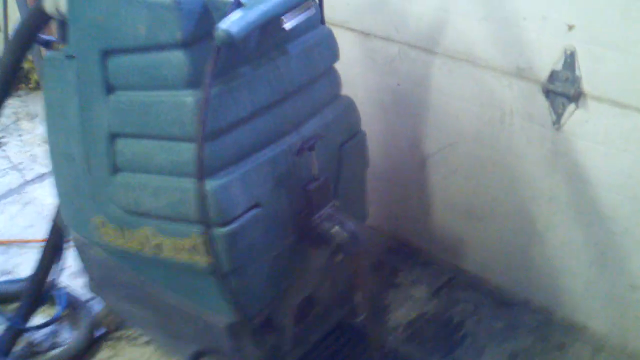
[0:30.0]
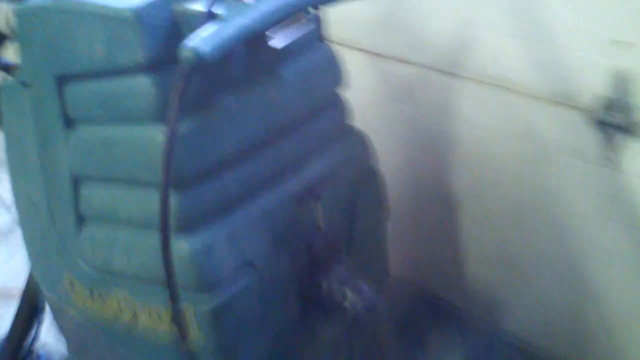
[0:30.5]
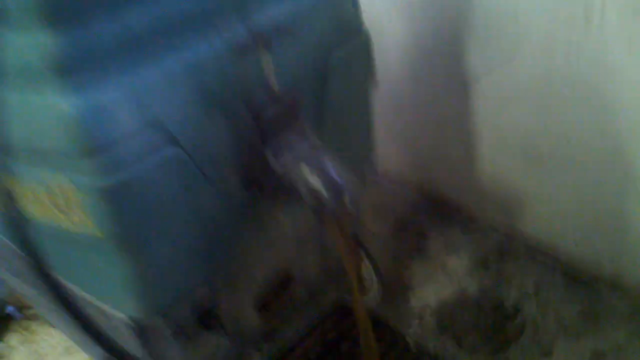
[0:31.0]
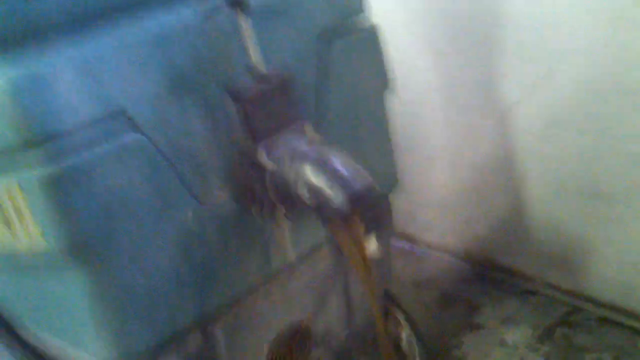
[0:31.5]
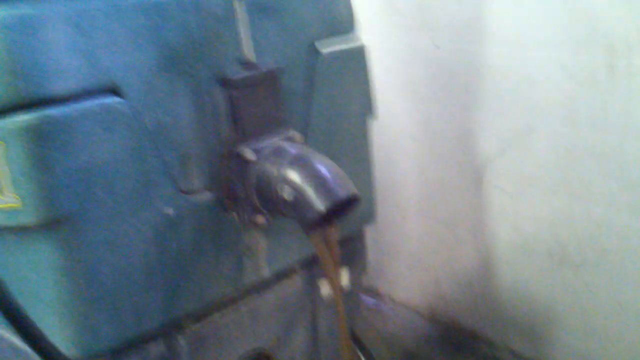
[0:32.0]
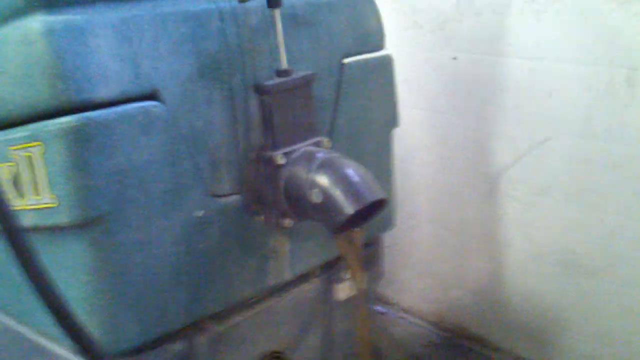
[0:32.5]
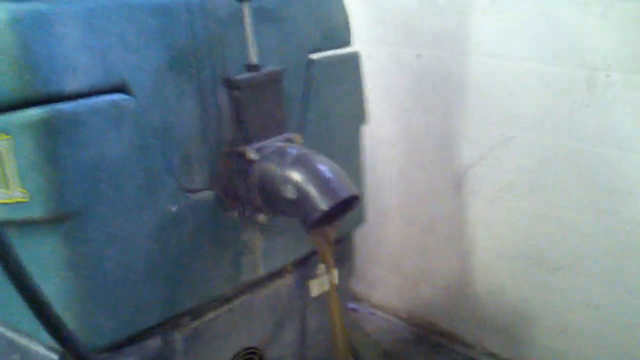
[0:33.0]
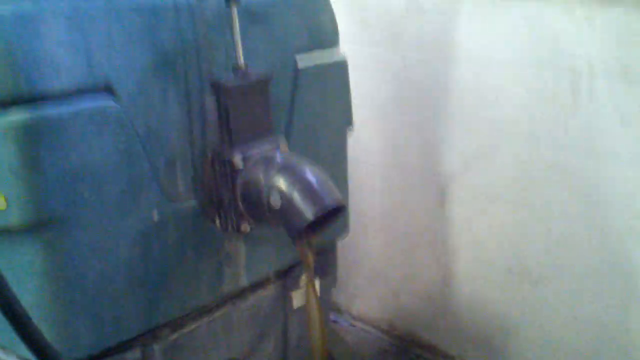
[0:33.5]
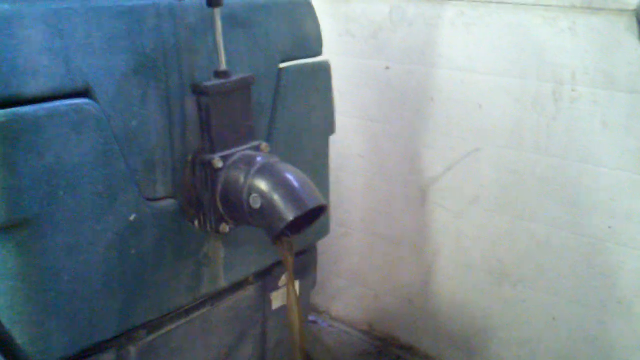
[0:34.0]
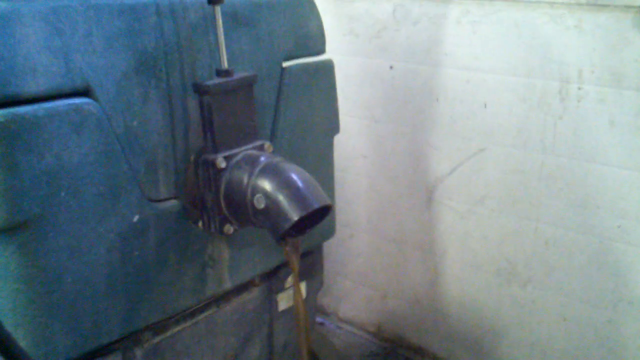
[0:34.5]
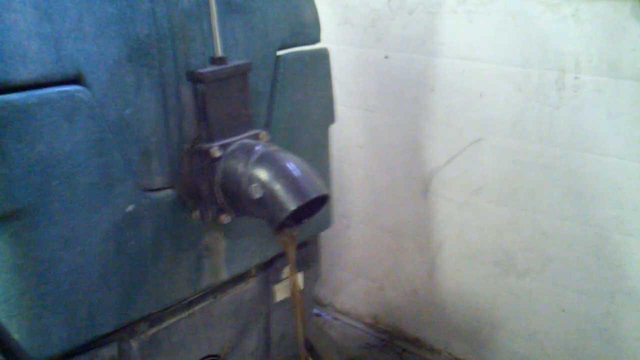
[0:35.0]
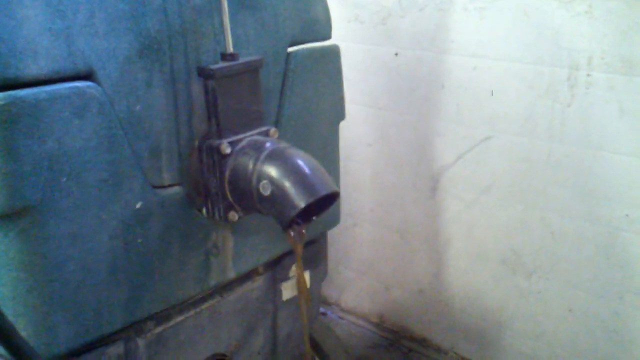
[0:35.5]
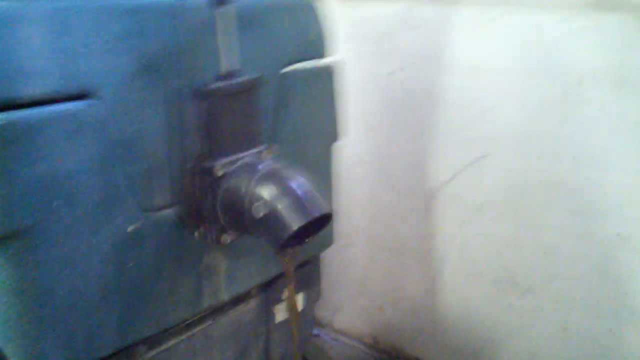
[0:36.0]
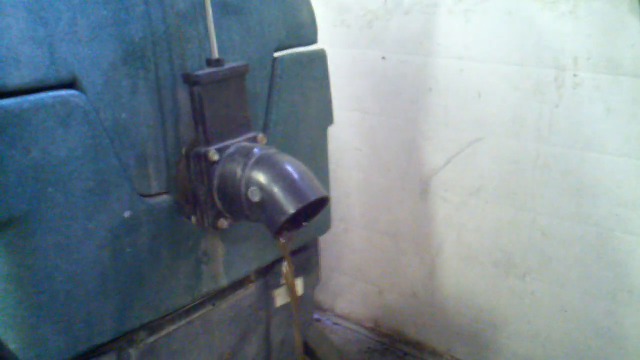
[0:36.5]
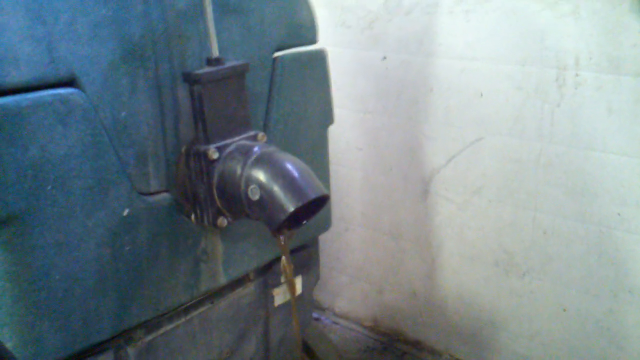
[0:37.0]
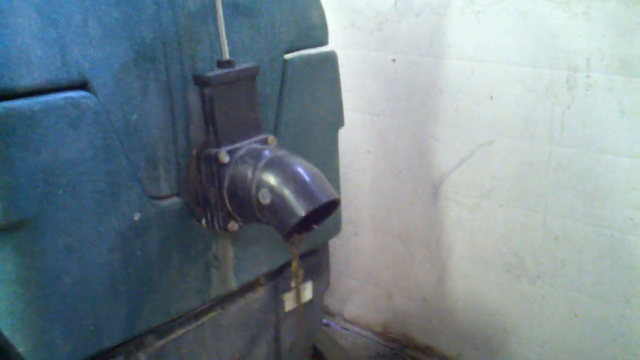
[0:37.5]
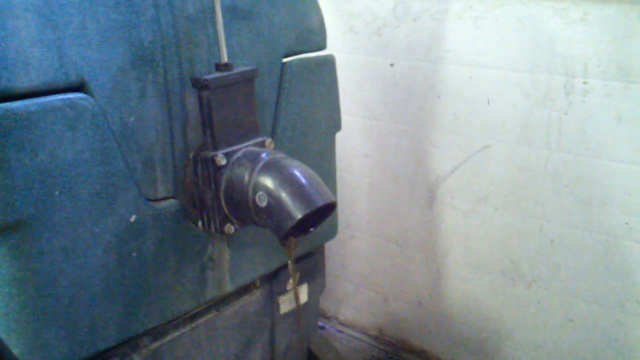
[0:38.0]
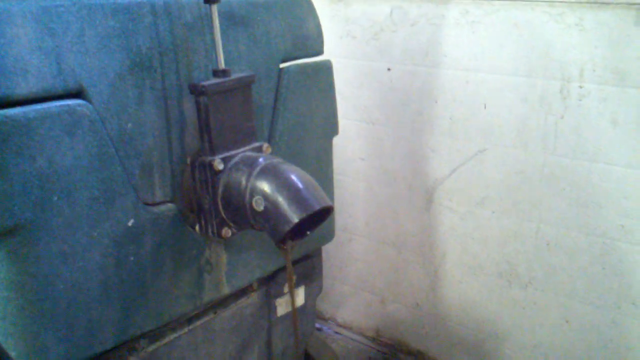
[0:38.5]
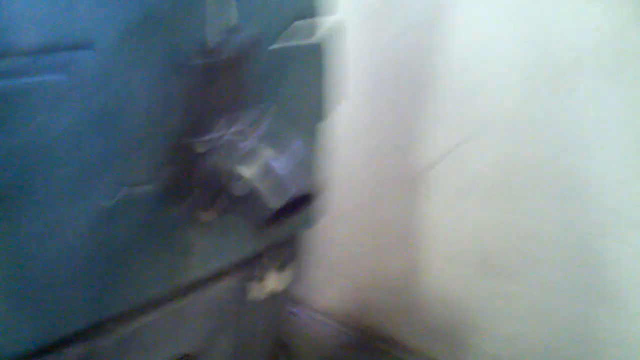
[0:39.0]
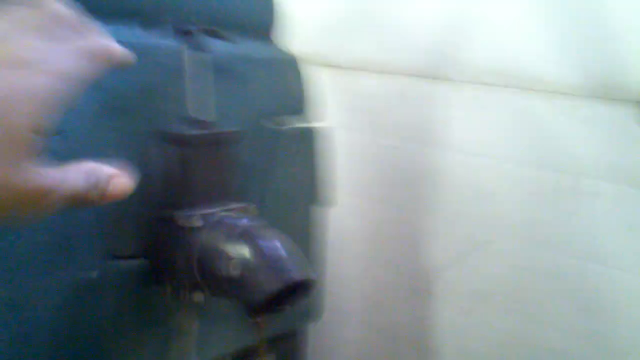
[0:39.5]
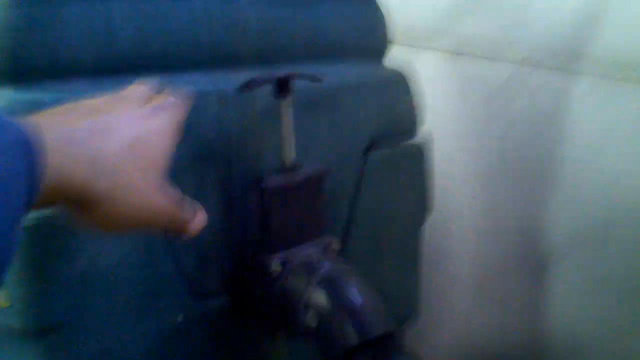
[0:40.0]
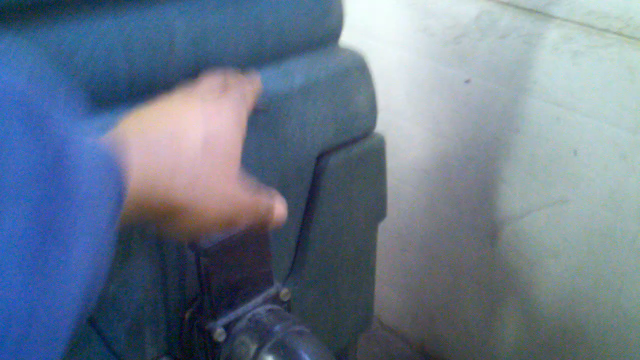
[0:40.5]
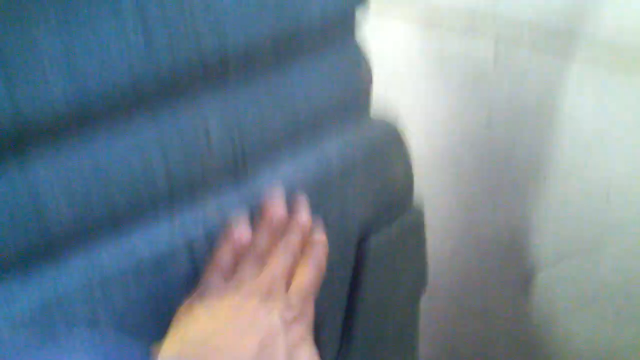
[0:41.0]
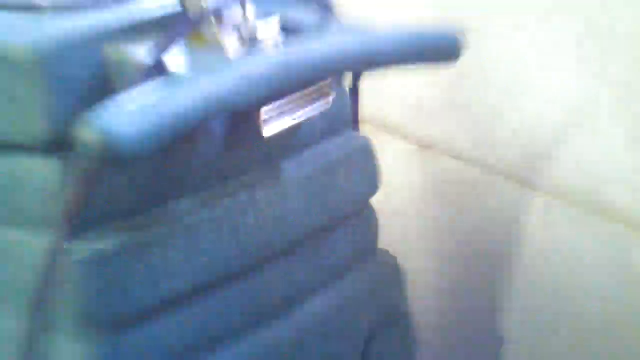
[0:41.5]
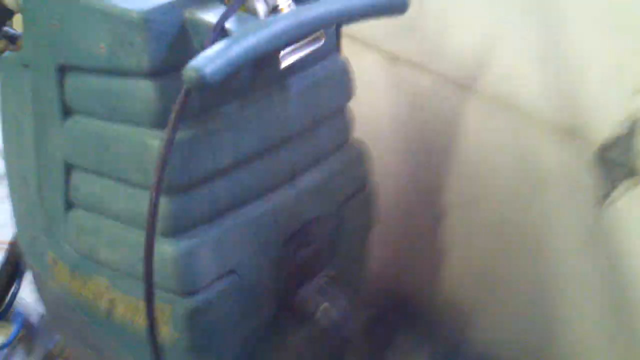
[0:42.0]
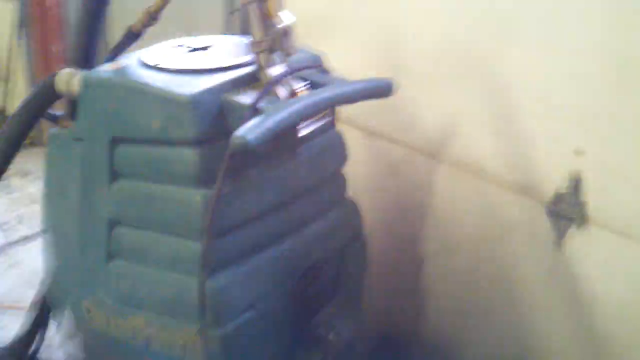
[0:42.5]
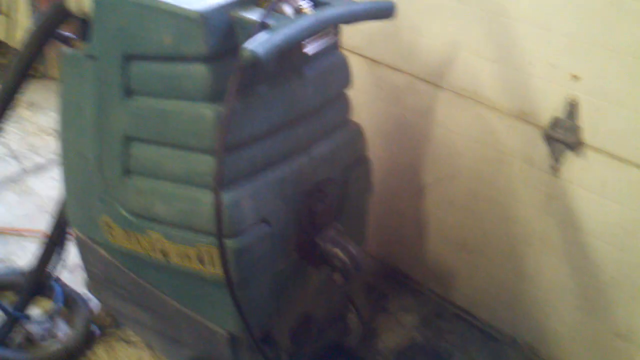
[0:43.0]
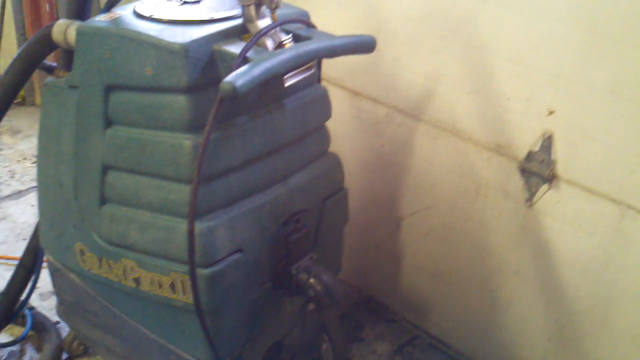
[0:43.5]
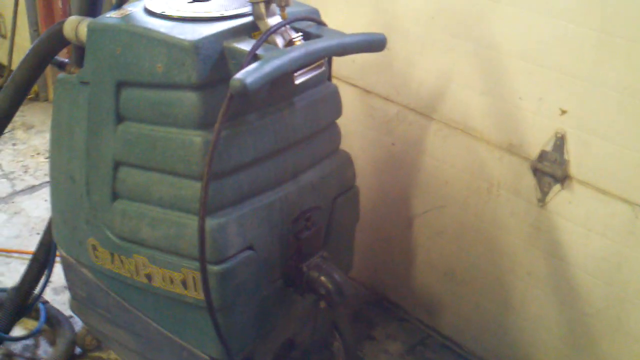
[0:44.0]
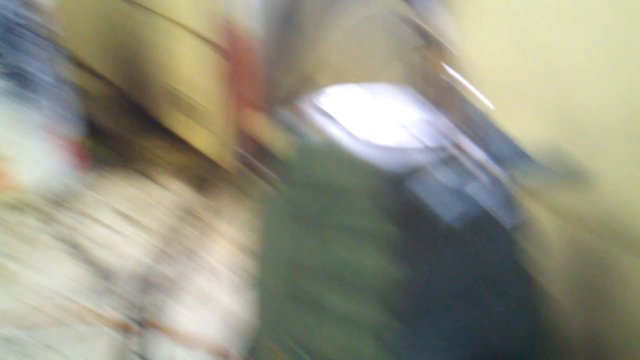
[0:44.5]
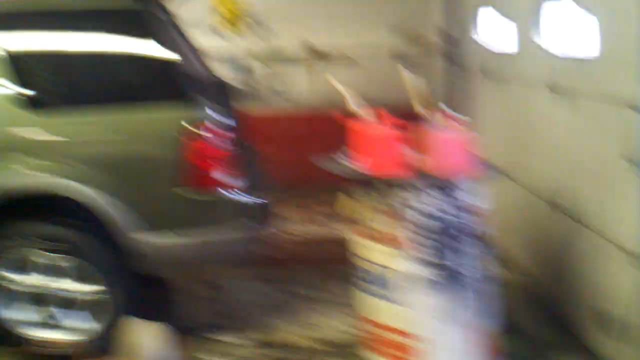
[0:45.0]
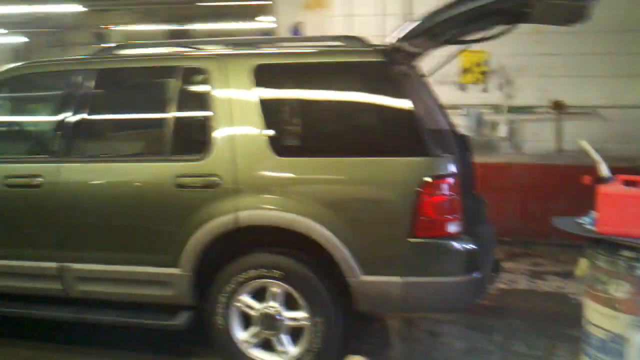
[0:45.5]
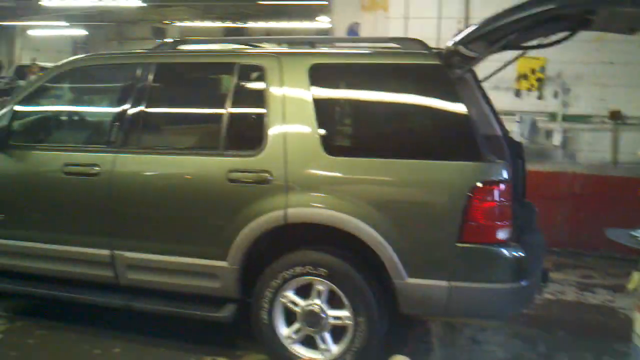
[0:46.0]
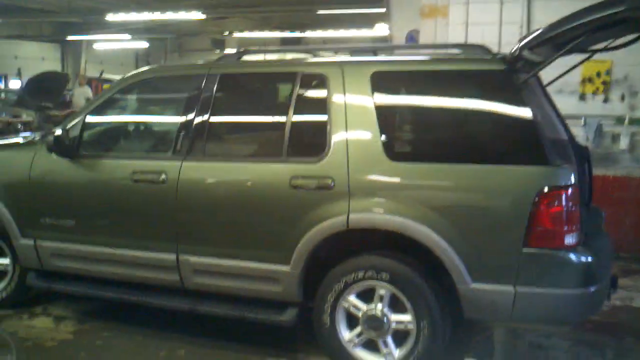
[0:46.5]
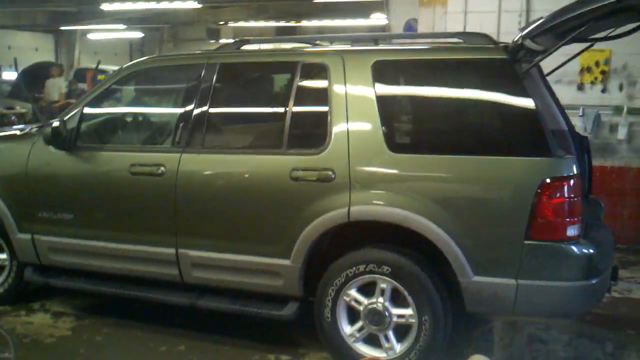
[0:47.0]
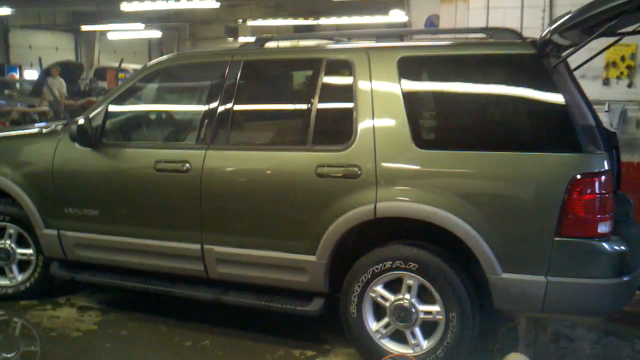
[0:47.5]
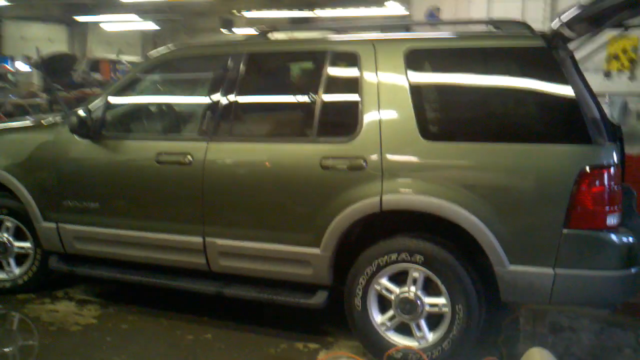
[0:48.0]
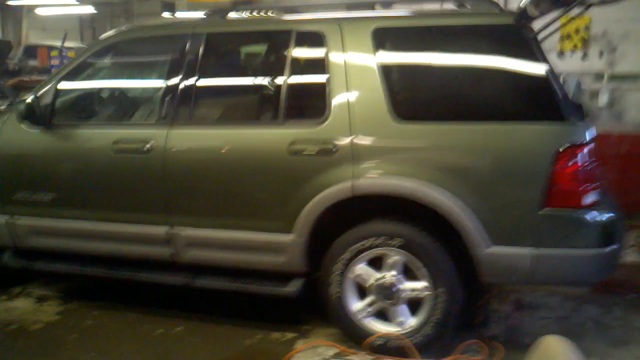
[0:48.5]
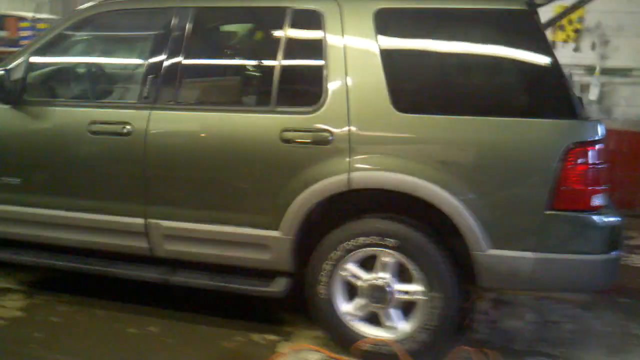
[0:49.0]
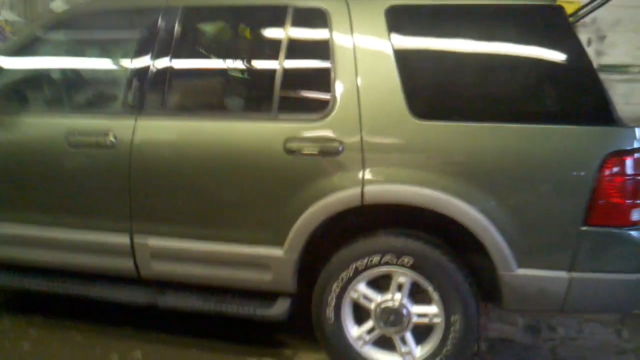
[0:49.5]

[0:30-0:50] A large blue industrial floor cleaner is shown. Large hoses come off its left-hand side. On the right-hand side, a person has lifted up the handle on top of the large black spigot, opening the valve, and dirty water pours out of the spigot, probably down a drain. The camera then turns to show that the scene is inside a shop with automobiles in it. The machine appears to be a large industrial vacuum, probably used to clean carpets inside vehicles, with the dirty water possibly sucked up from vehicle carpets.